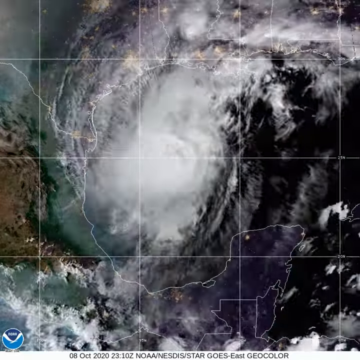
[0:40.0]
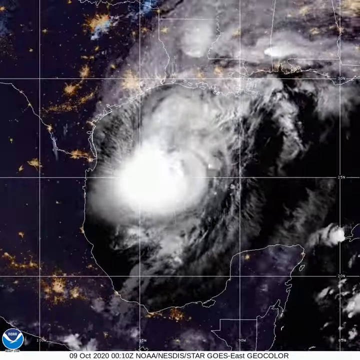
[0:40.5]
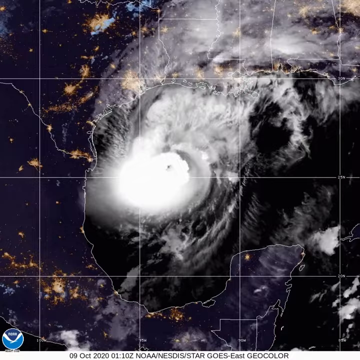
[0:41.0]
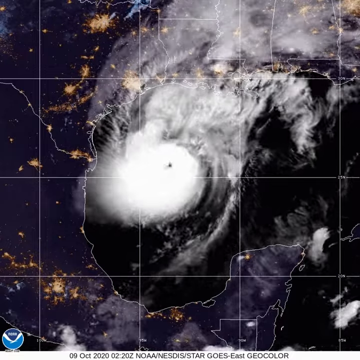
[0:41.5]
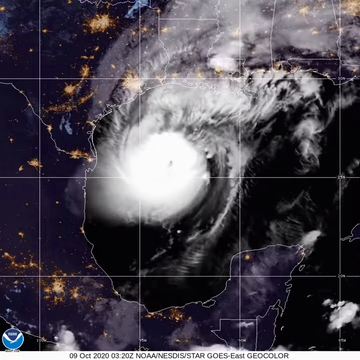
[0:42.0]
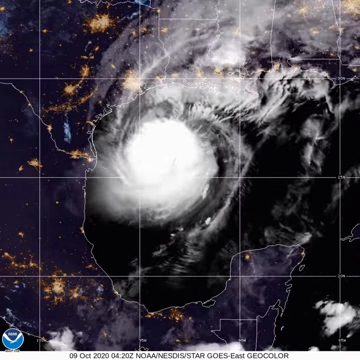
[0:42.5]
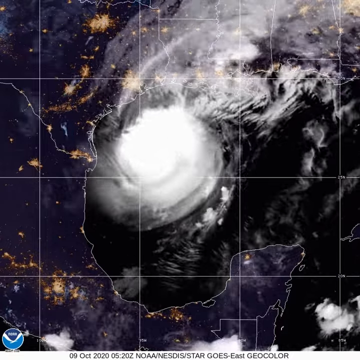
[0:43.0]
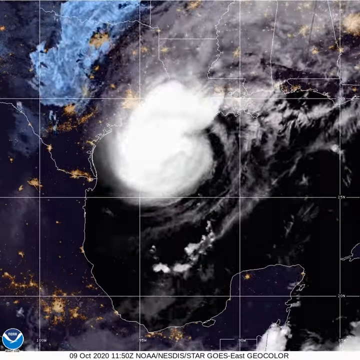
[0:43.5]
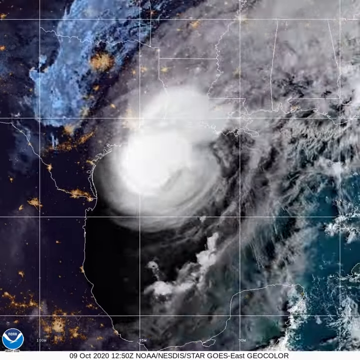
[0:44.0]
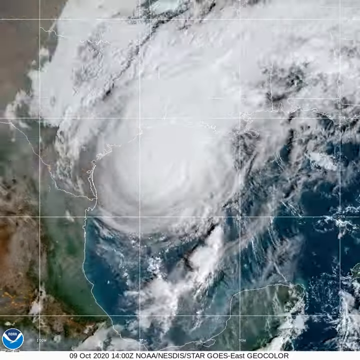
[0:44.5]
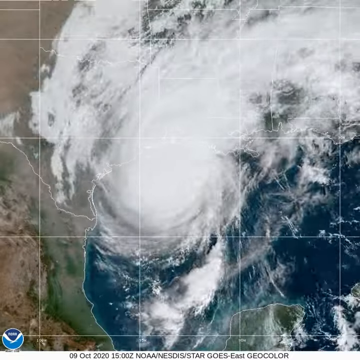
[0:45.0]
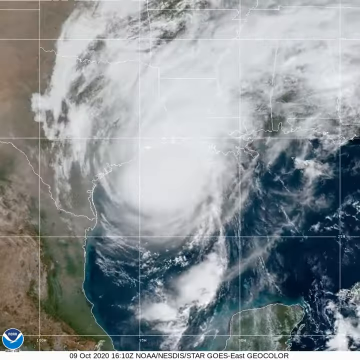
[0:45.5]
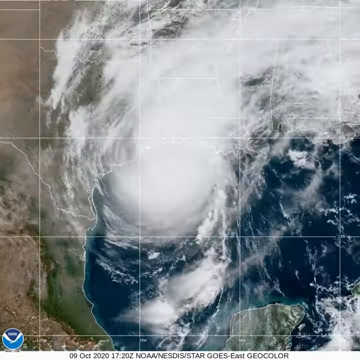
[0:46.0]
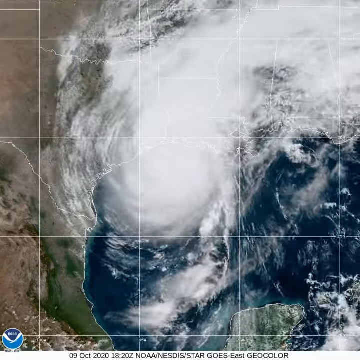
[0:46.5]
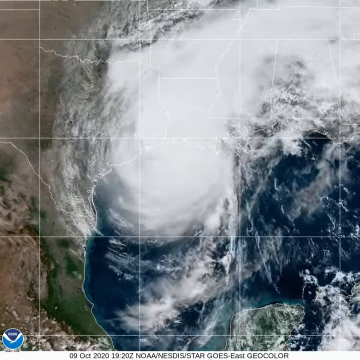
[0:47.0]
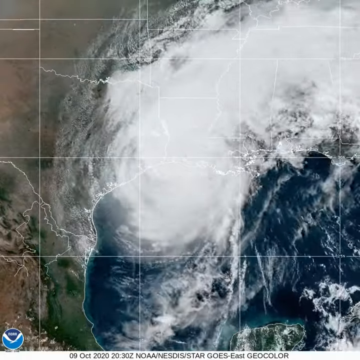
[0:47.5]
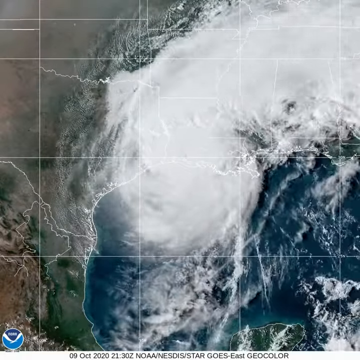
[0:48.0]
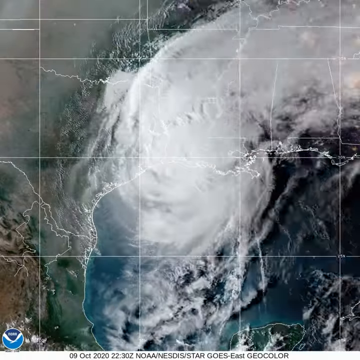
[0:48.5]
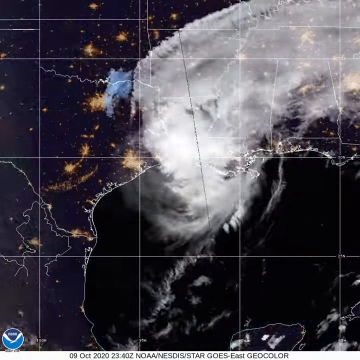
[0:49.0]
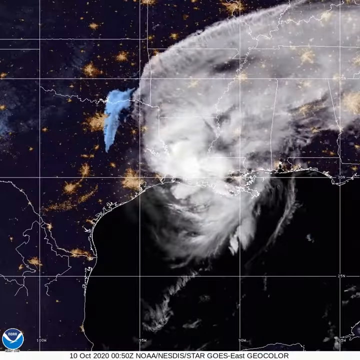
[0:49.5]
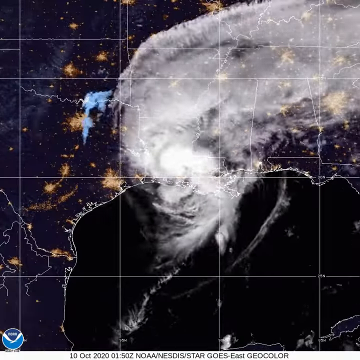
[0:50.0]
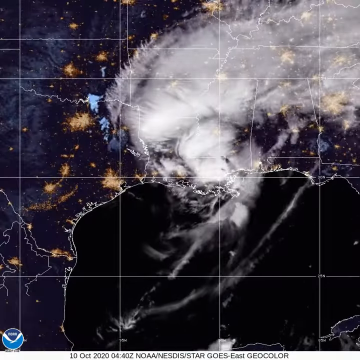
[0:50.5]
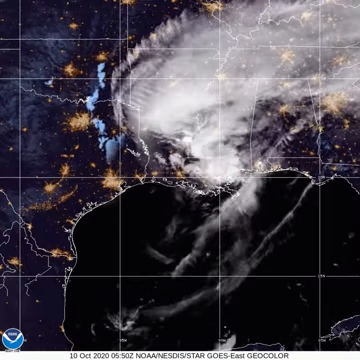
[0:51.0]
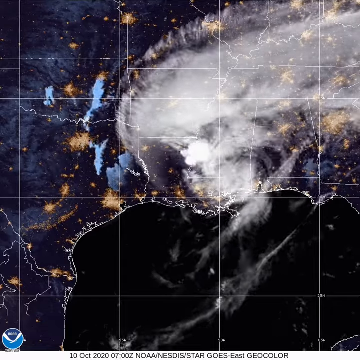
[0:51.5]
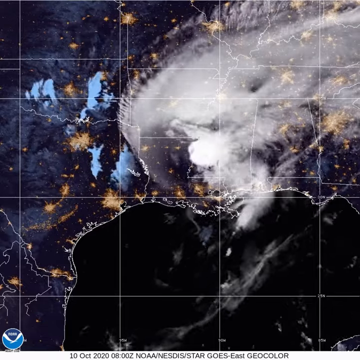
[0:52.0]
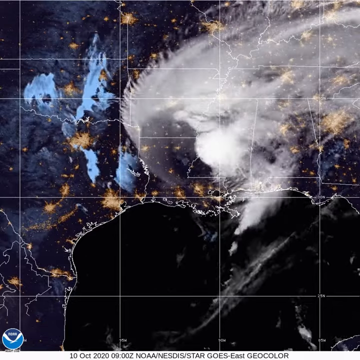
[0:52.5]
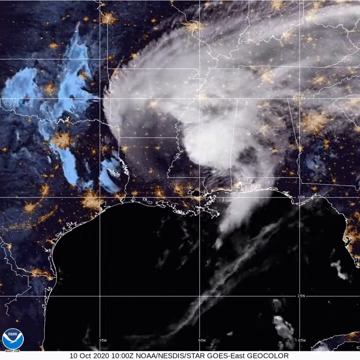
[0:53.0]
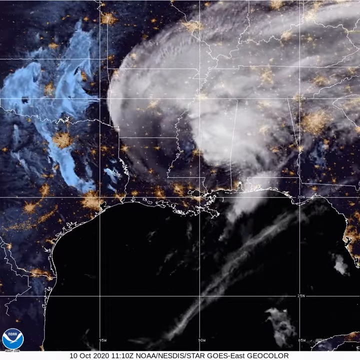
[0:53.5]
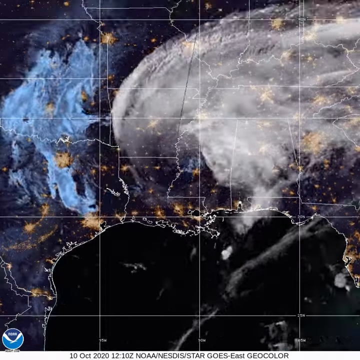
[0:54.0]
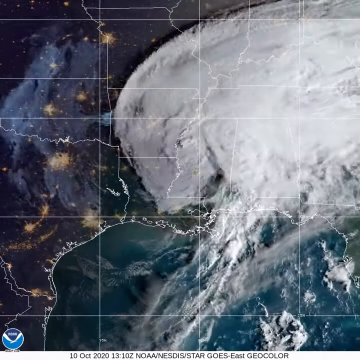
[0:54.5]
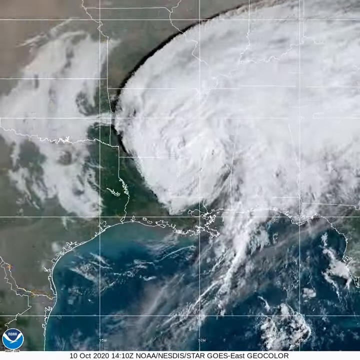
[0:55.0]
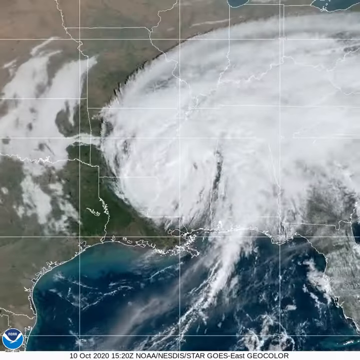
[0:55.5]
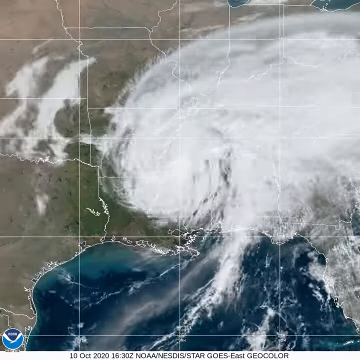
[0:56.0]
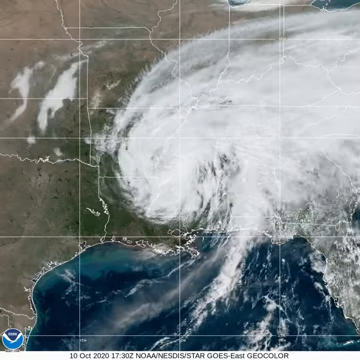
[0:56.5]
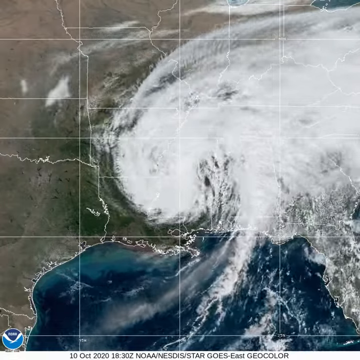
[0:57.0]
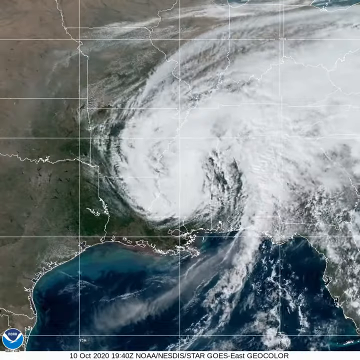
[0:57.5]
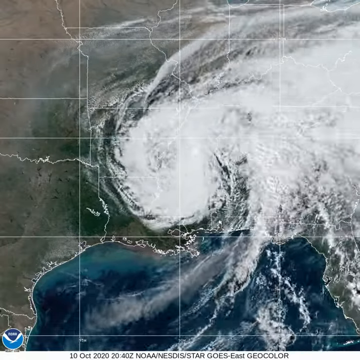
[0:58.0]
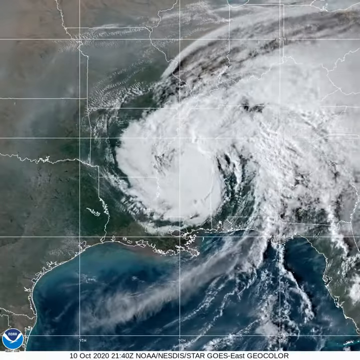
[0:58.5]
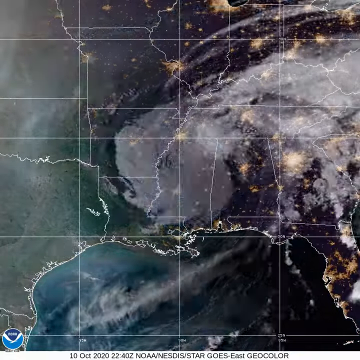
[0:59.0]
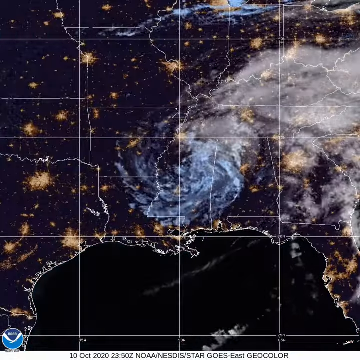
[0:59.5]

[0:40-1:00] Satellite imagery shows a hurricane rotating in the Gulf of Mexico and approaching Texas and Louisiana, transitioning between nighttime and daytime views. Halfway through, the hurricane appears to make landfall, hitting both Texas and Louisiana. As it hits the continent it begins to weaken, and the cloud formation begins to break apart as it moves over Louisiana. In the nighttime images, areas of the different states are lit up by cities. After landfall, the dissipating clouds are carried northeast across the United States. By the end, the cloud formation dissipates further into just a small patch of clouds, with smaller patches emanating from it.